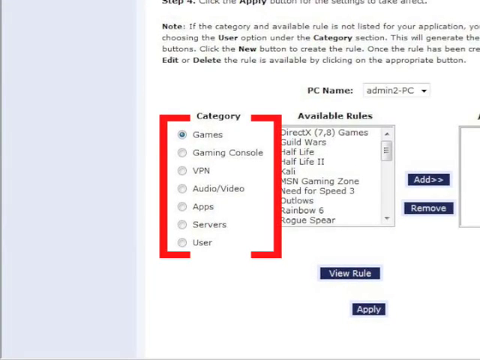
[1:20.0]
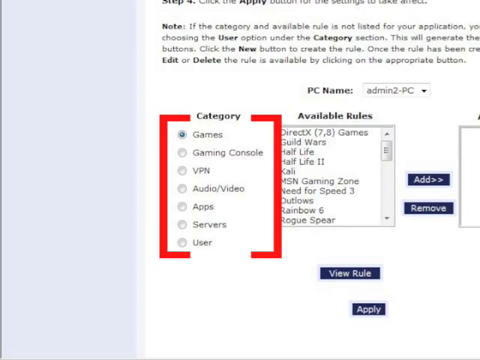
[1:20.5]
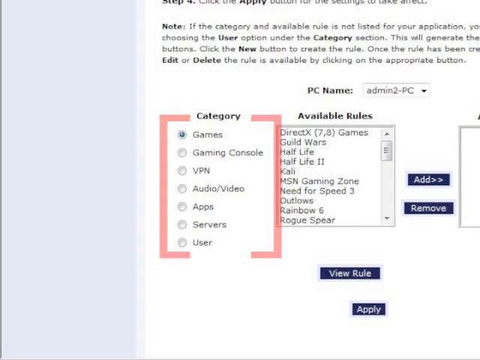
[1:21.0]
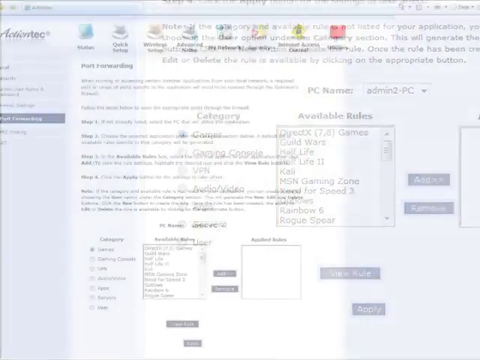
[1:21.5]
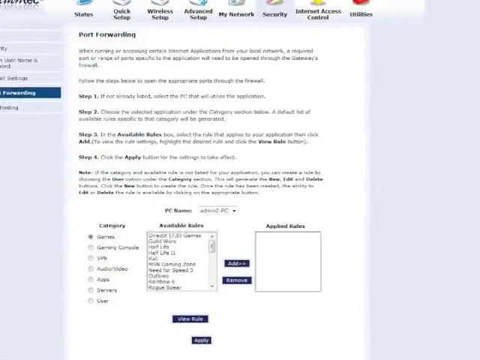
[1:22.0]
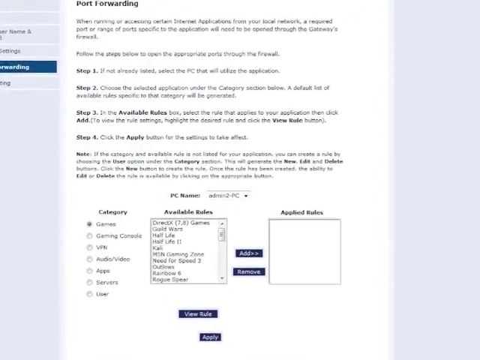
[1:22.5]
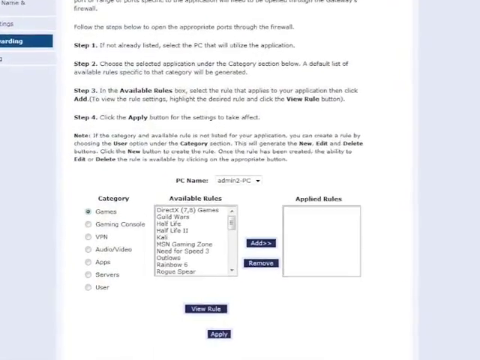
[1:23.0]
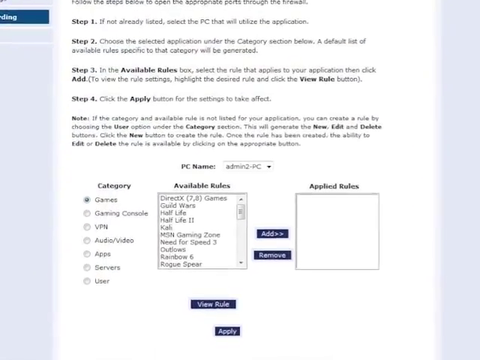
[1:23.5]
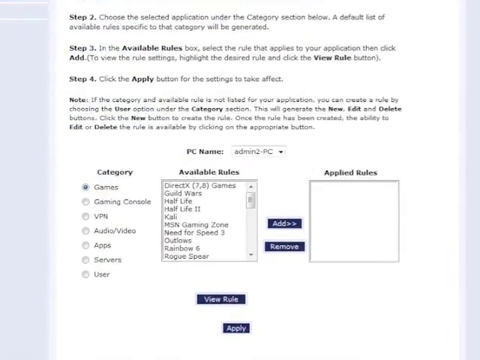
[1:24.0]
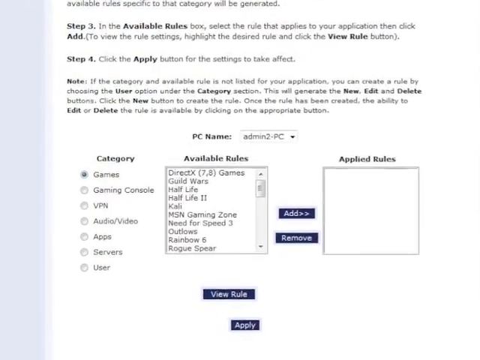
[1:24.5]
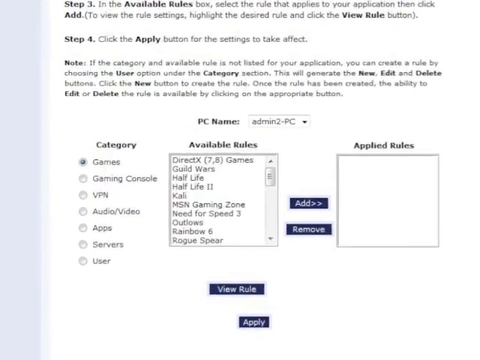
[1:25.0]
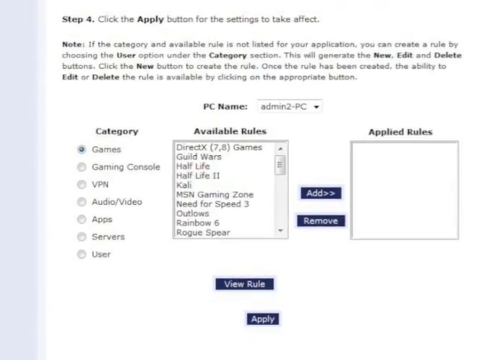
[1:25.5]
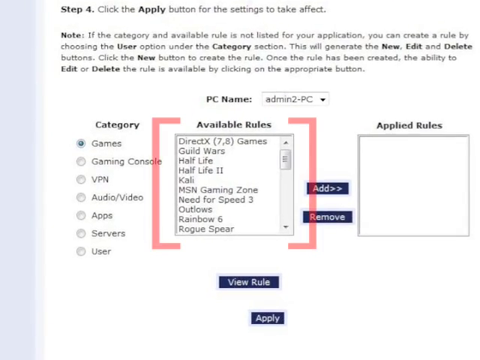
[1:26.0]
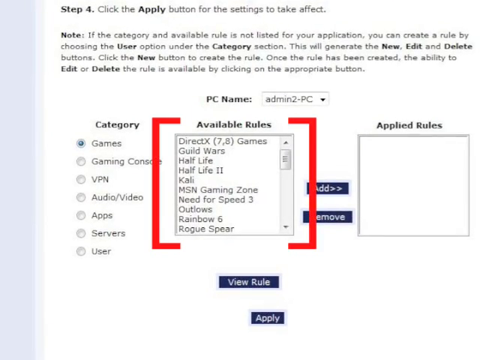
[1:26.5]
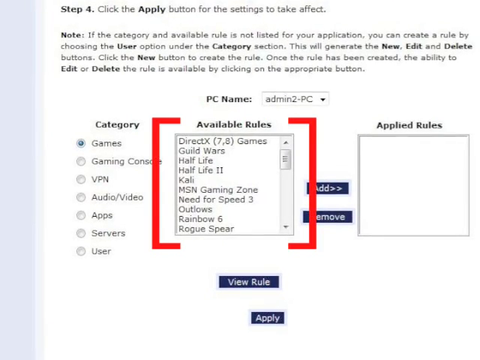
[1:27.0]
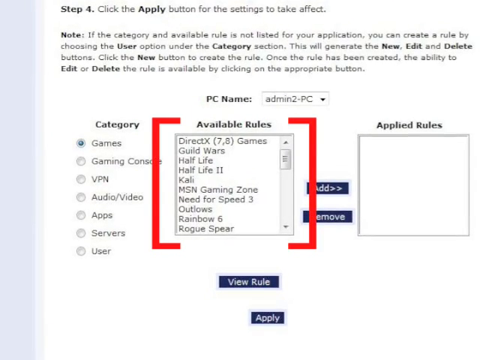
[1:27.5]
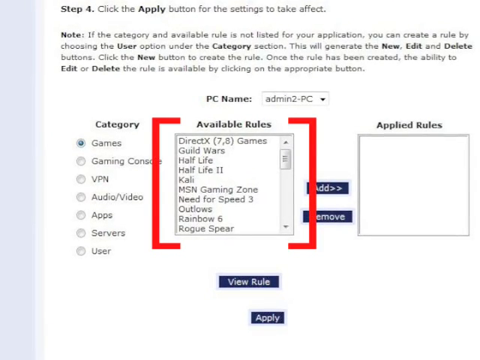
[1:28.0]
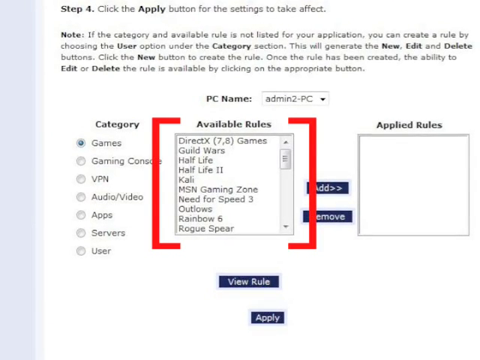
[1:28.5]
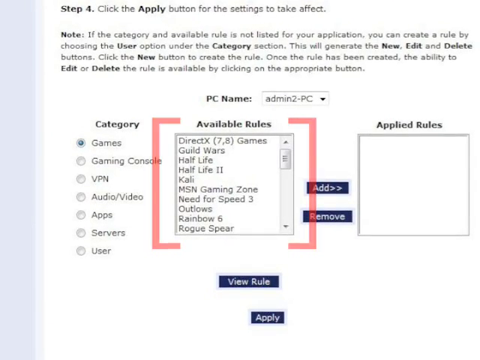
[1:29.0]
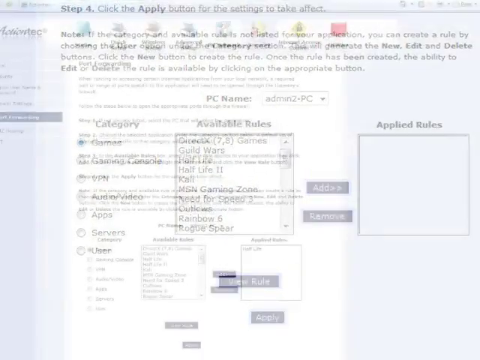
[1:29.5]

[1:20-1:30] The category is highlighted, with games selected. Under games are gaming console, VPN, audio/video, apps, servers and user. To the right are the available rules, which seem to refer to games, and there is a place to add and remove applied rules. The available rules are then highlighted, as if moving on to that section. Text reading "step one, step two, step three, step four" is also visible with information for each step, probably leading to a conclusion below, followed by an area with notes and a paragraph.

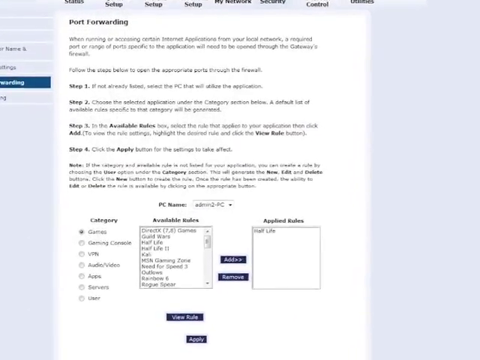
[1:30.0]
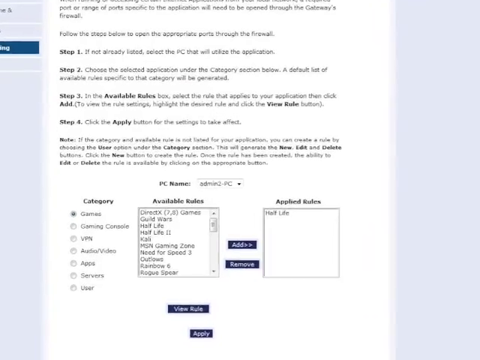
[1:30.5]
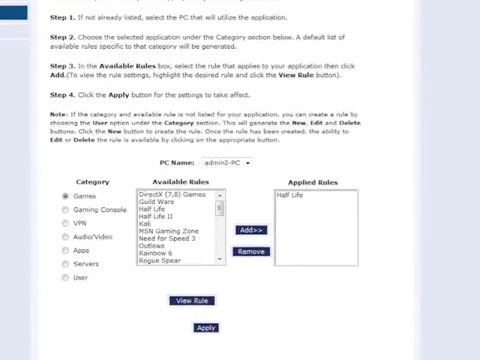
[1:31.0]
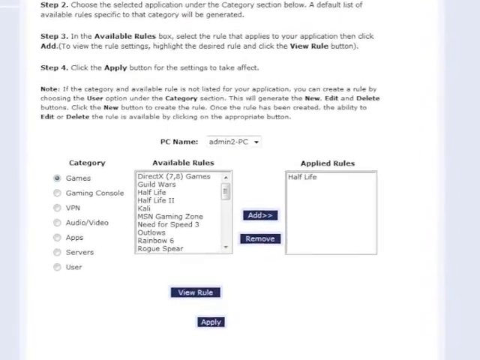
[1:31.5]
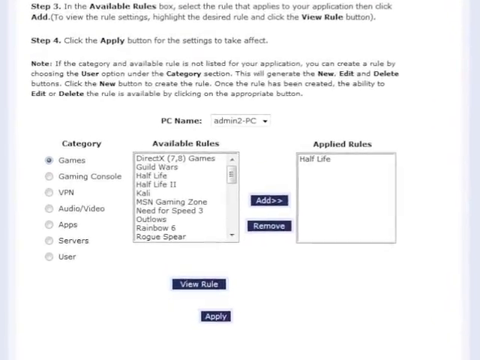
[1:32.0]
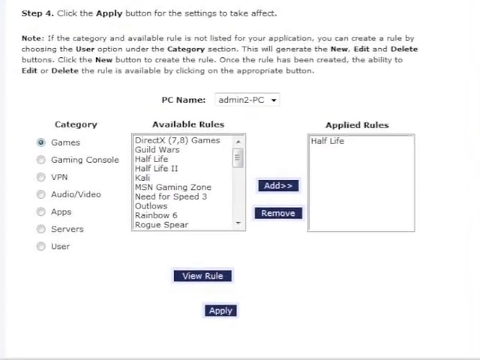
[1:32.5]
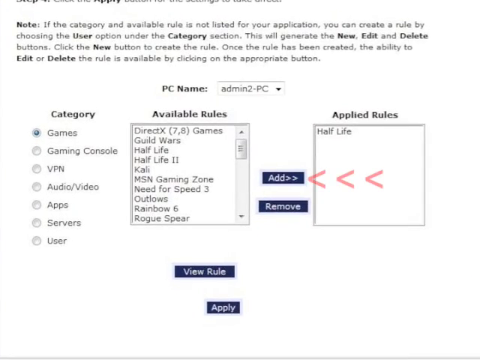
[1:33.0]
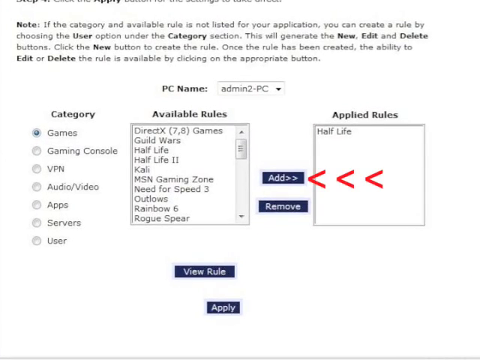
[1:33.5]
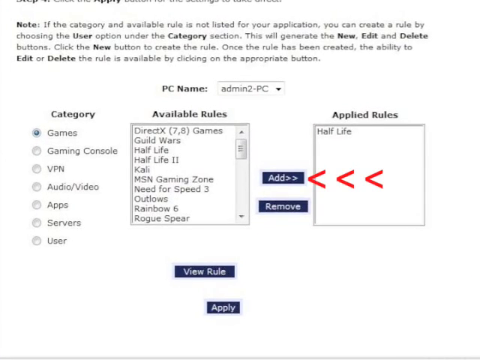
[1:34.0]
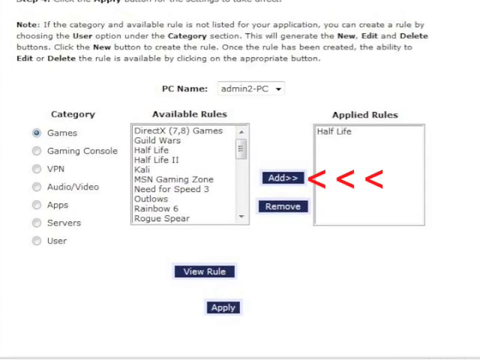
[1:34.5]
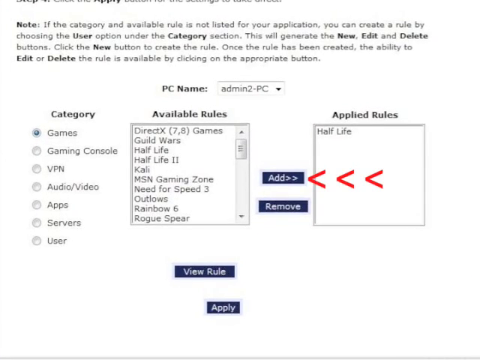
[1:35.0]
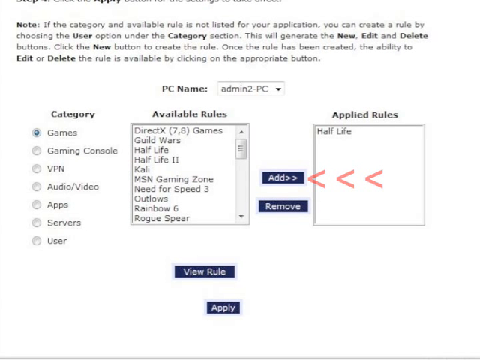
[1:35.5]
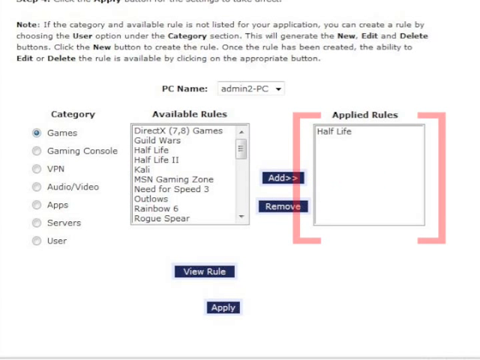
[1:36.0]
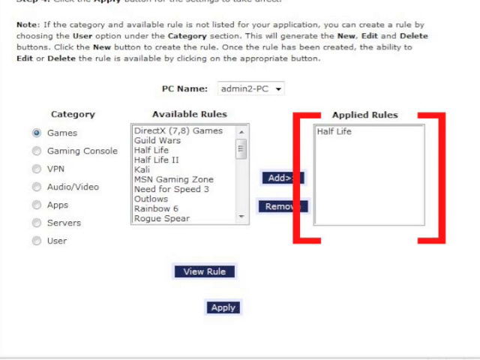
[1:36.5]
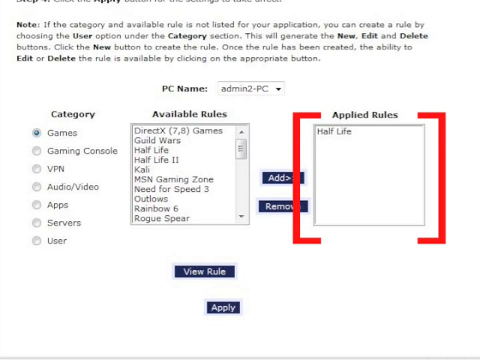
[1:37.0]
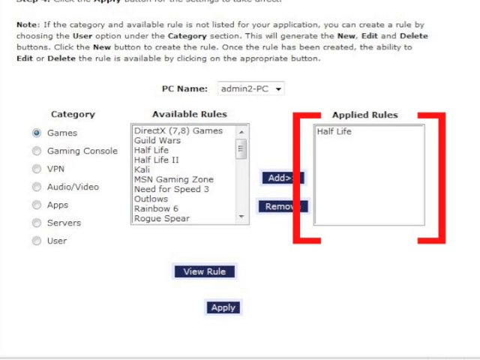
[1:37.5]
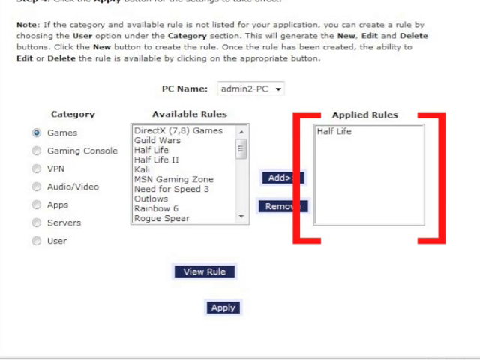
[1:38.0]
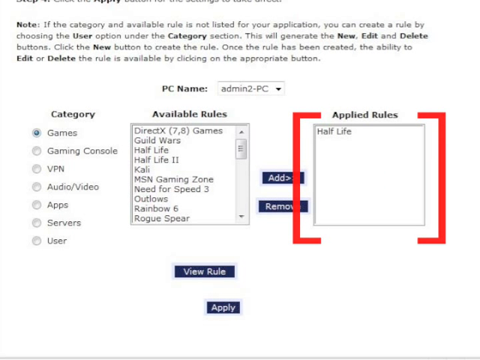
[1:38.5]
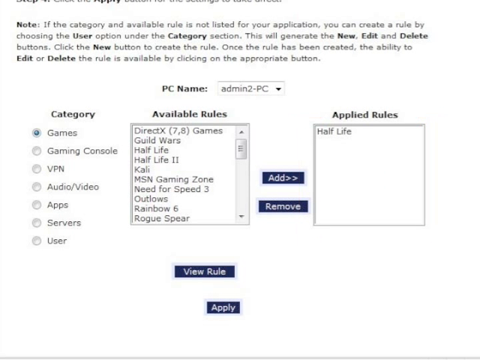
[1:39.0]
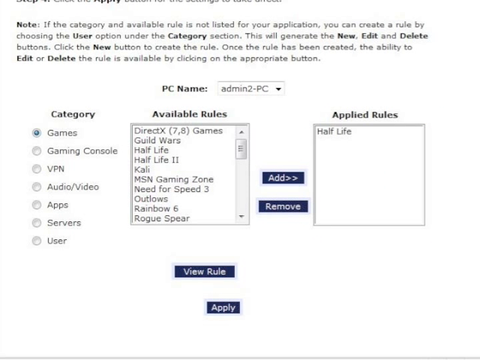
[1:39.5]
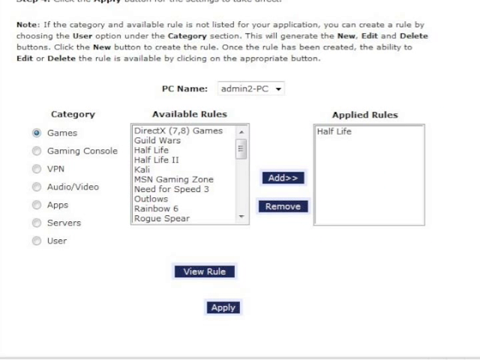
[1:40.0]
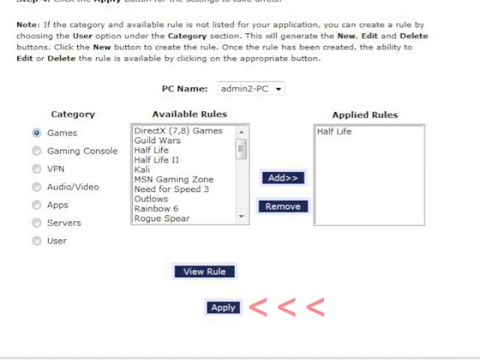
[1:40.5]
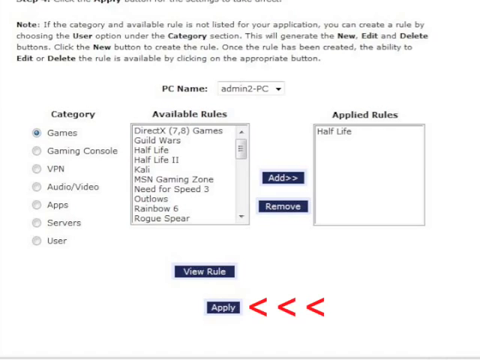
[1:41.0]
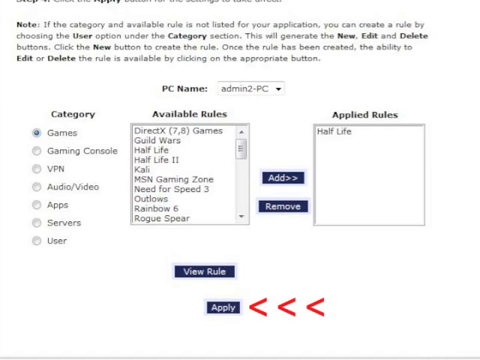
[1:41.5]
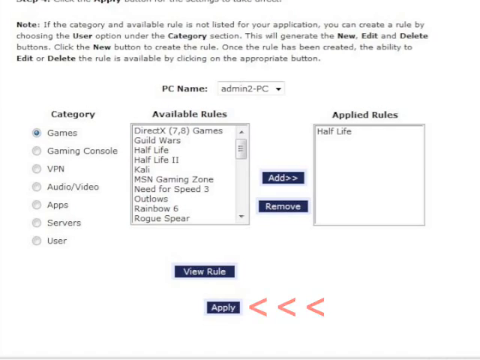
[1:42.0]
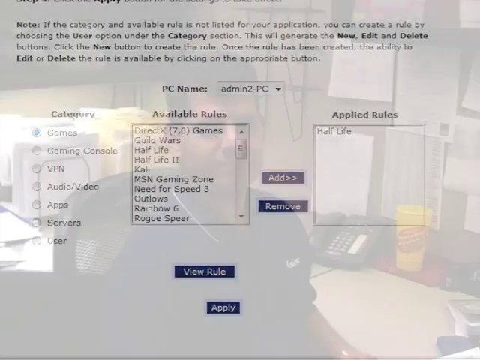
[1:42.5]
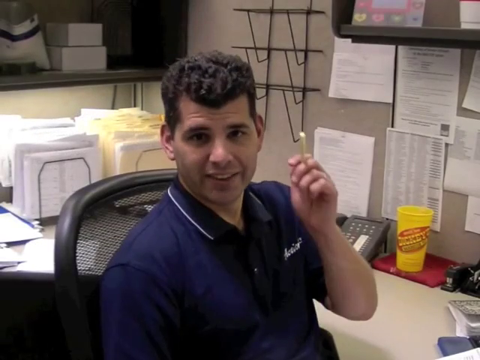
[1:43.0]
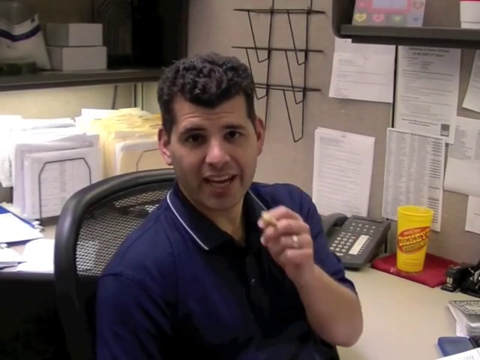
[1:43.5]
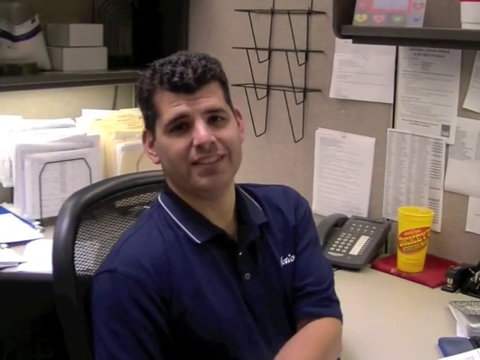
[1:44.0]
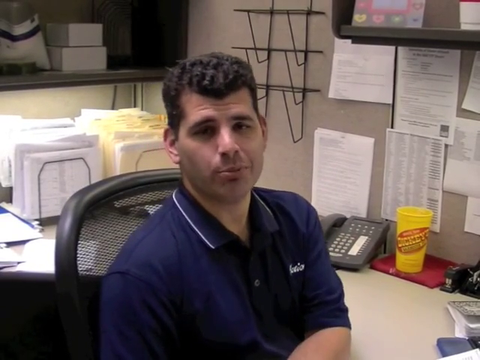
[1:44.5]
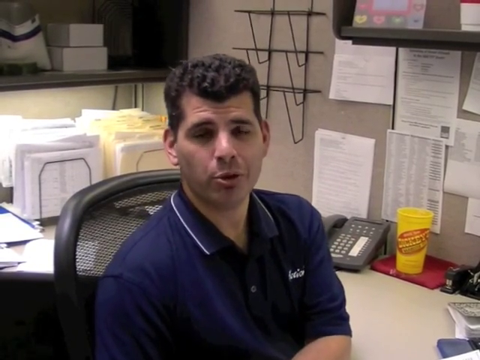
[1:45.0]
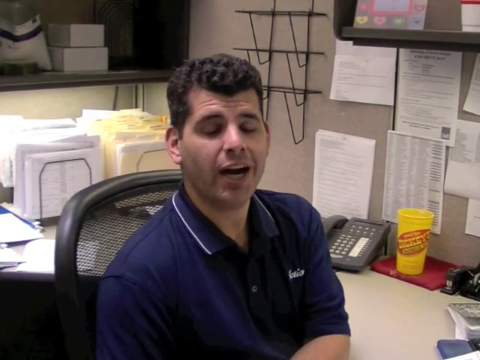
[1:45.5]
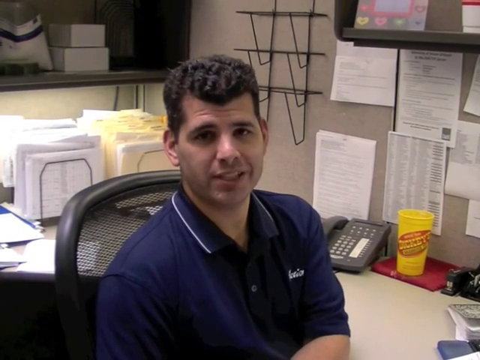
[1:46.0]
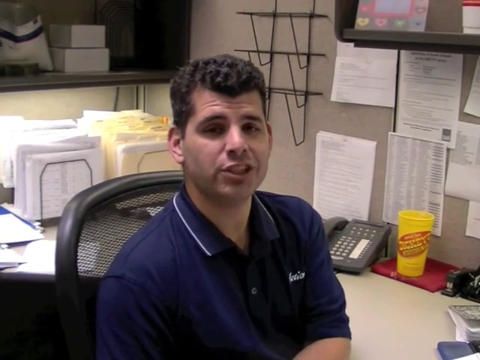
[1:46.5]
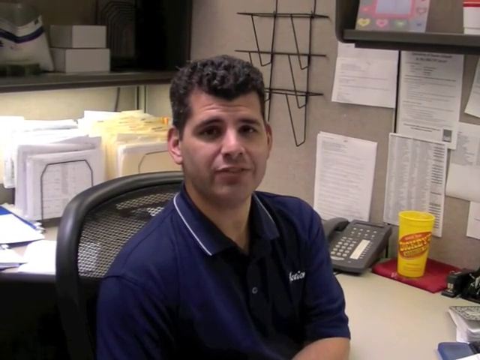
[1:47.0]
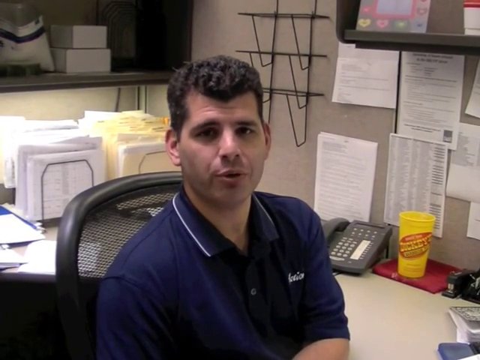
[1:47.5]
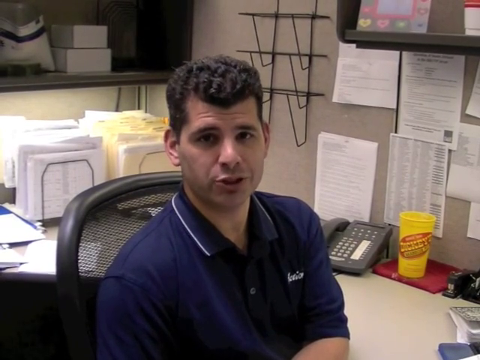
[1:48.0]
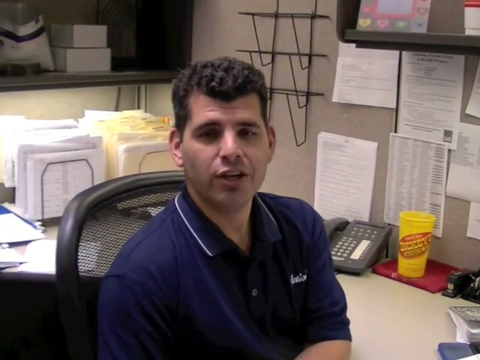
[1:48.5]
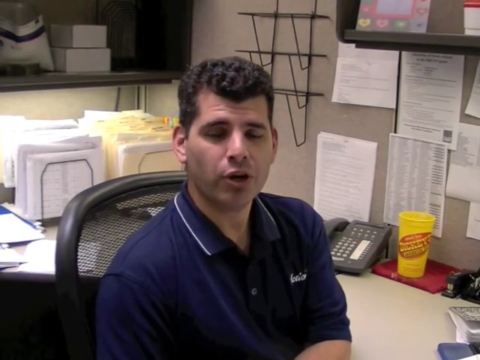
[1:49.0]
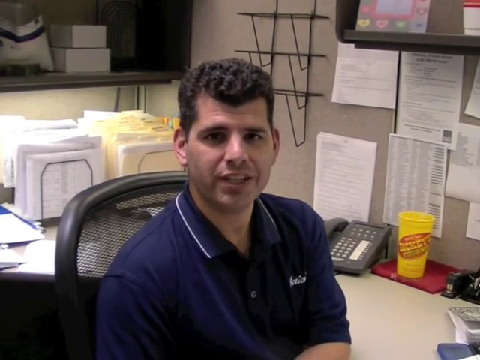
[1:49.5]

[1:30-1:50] The port forwarding selection page shows a paragraph of information that looks like it is given as a series of steps, apparently four in total. The camera pans in slightly. An arrow points to the add button between the available rules and the applied rules, and parentheses mark the applied rules as highlighted, with half-life added as the rule. Below that is an apply button to apply the settings. The individual is shown sitting in his chair with an object in his hand and a ring on his finger; he quickly drops his hand as he speaks. The man speaks casually, and some information appears at the bottom that almost looks like a web address.